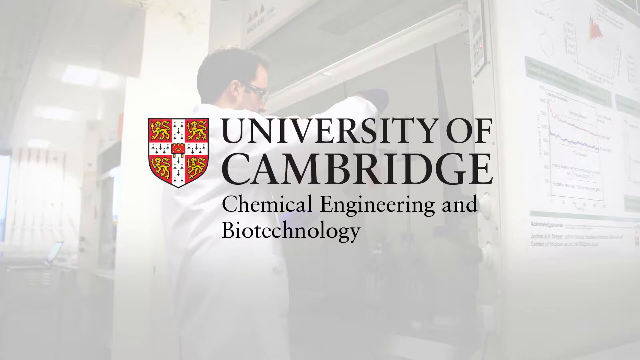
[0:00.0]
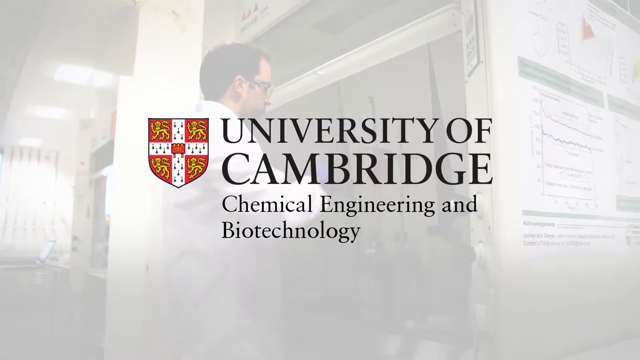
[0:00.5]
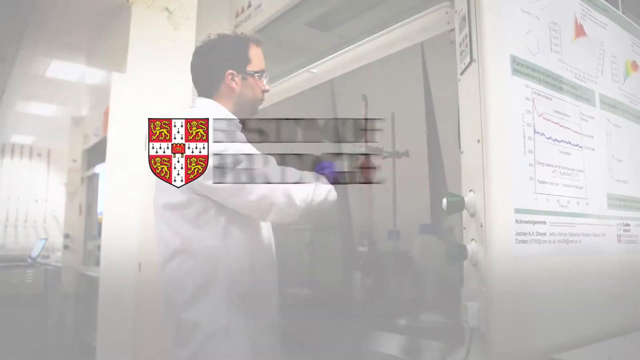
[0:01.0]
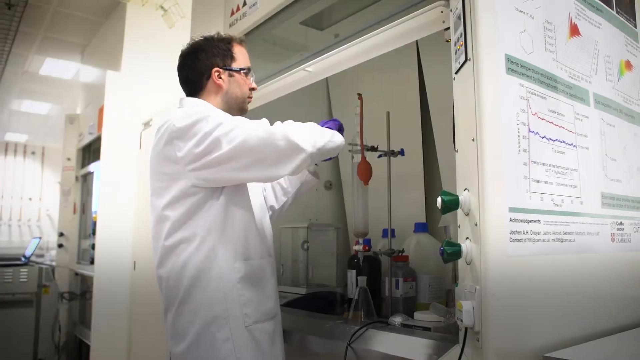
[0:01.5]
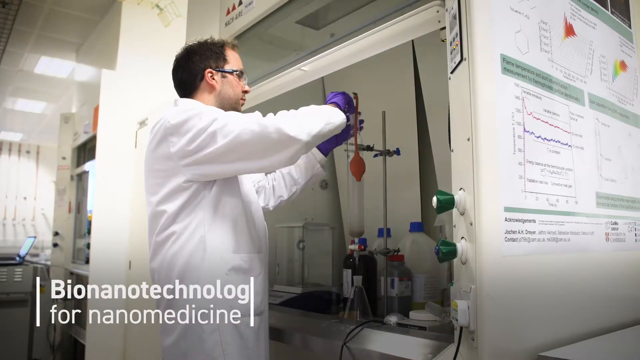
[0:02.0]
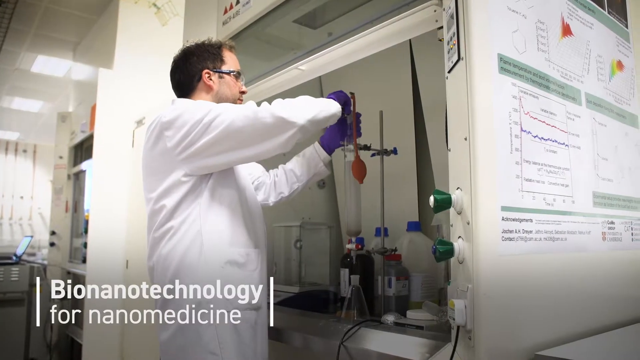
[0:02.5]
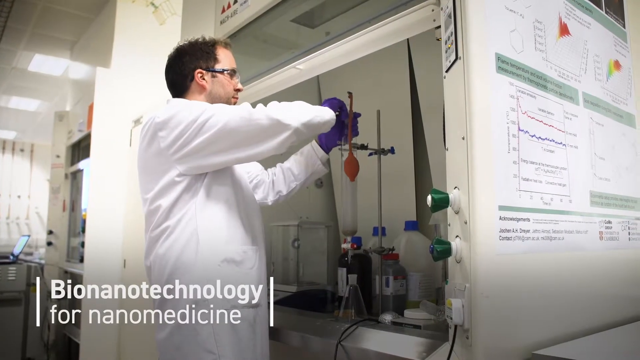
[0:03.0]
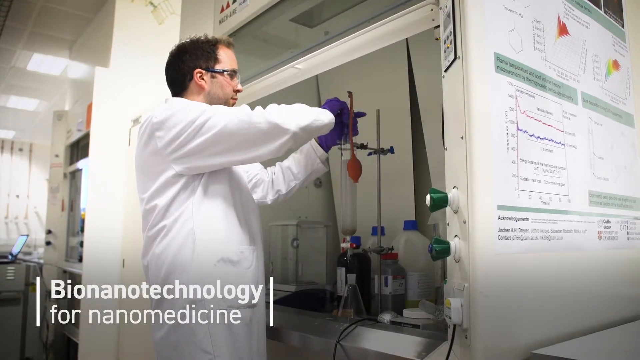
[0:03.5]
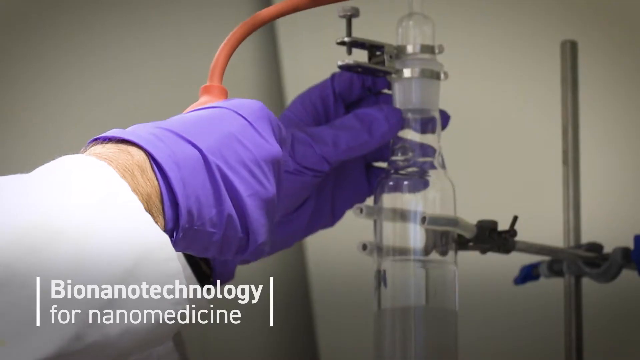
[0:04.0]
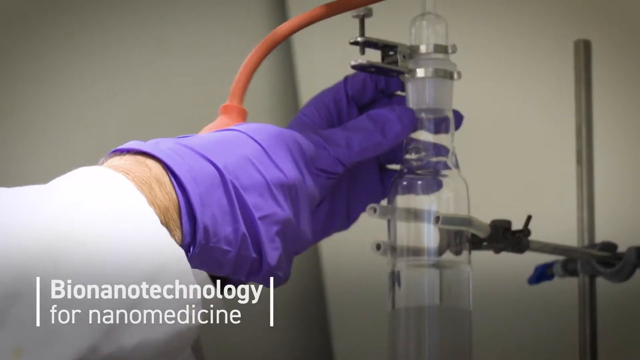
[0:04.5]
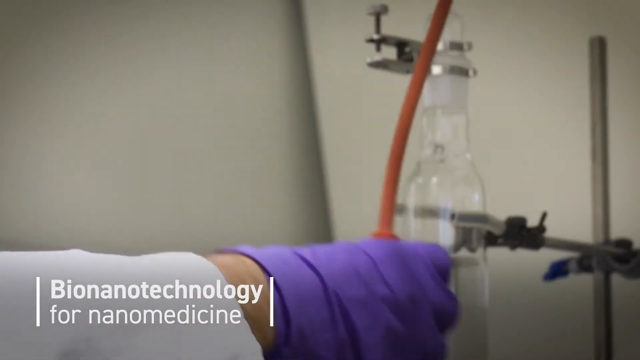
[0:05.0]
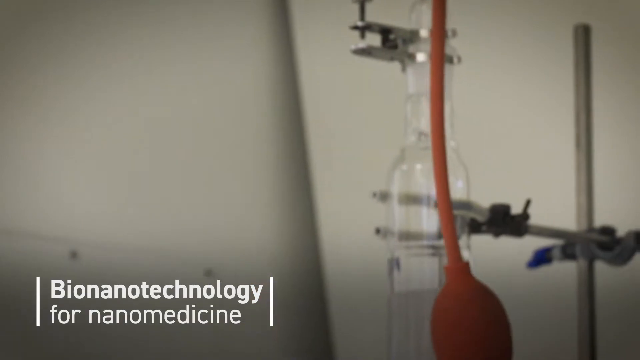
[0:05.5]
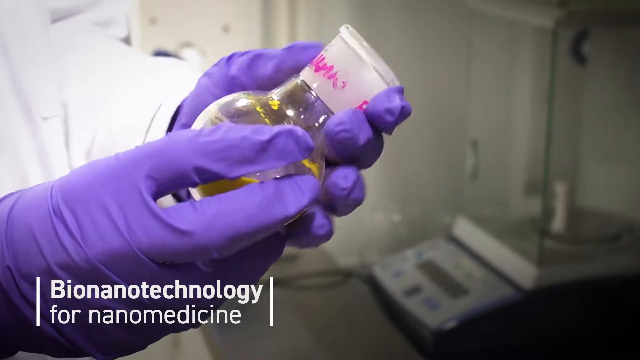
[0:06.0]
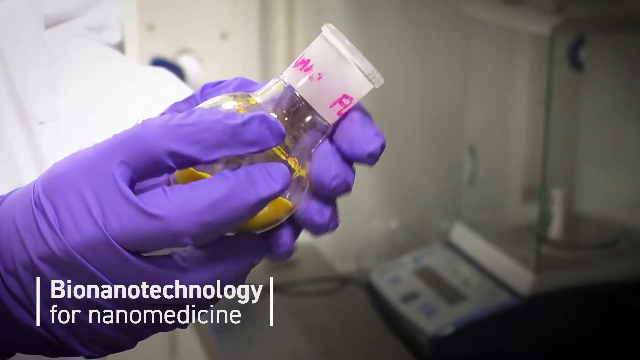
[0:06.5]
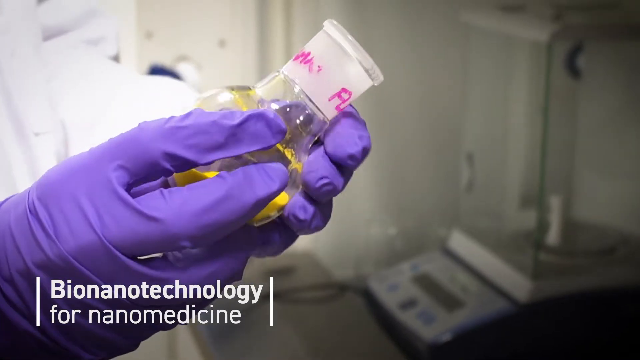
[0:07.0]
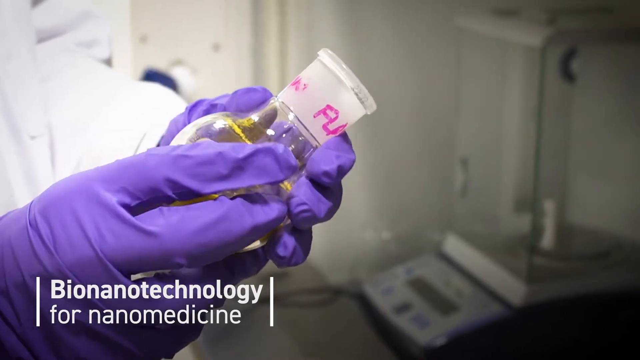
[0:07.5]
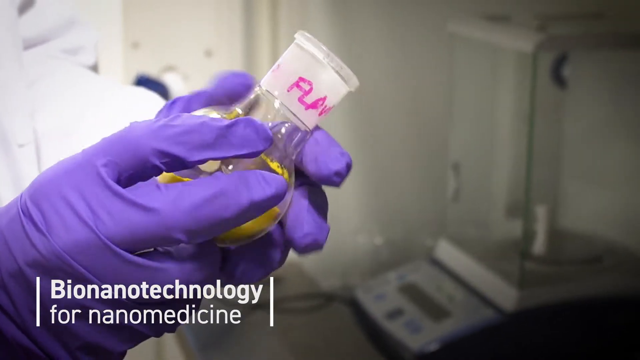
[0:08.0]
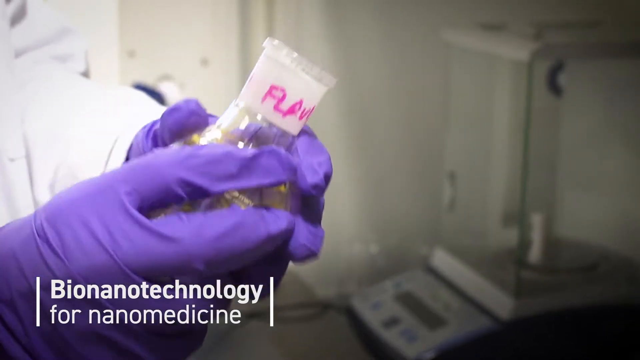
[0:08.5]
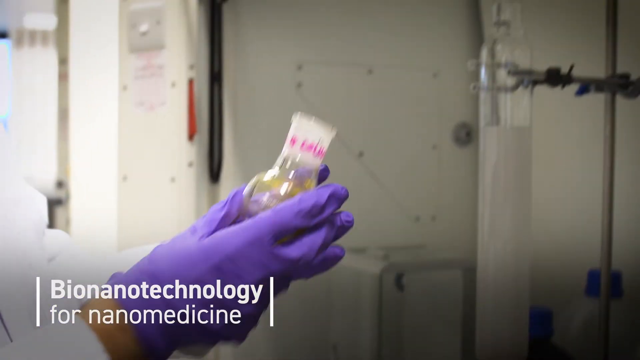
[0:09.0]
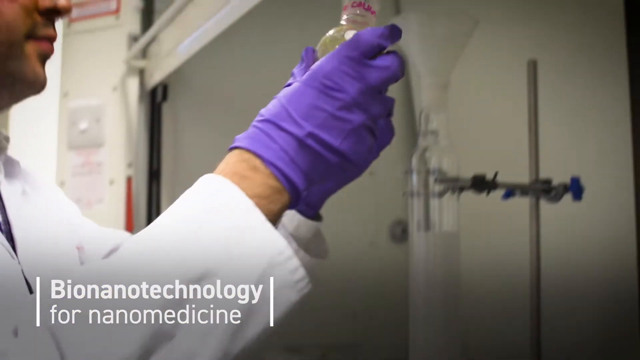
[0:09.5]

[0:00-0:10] The video apparently opens by showing Cambridge University on the screen, and then text reads "... technology for nanomedicine." A scientist wearing purple gloves holds a beaker full of a yellow substance, apparently labelled "flammable" by hand. He is working on an experiment, putting the liquid into a machine. He pumps a rubber ball, and he adds the liquid into a funnel, from which it drains into another part of the experiment, a glass container. The experiment is housed in a small enclosed area covered on three sides, like a shelf with sides, and it almost looks as if it has doors that can be closed.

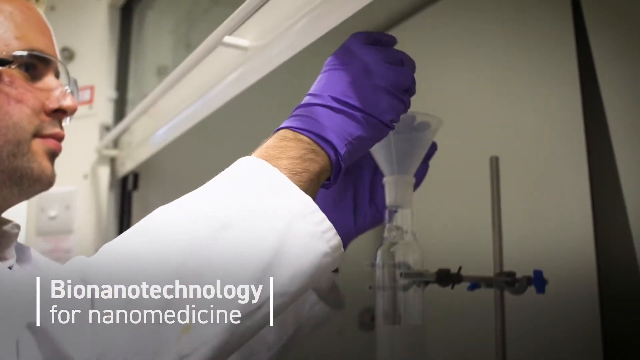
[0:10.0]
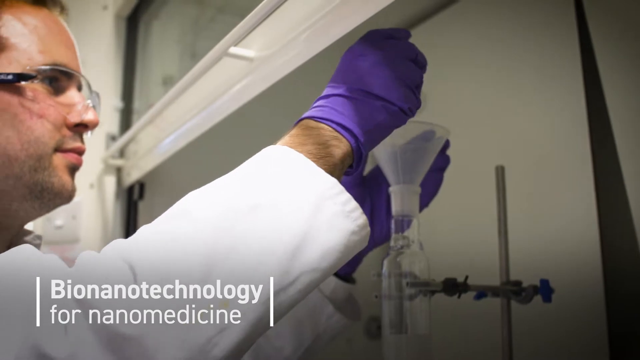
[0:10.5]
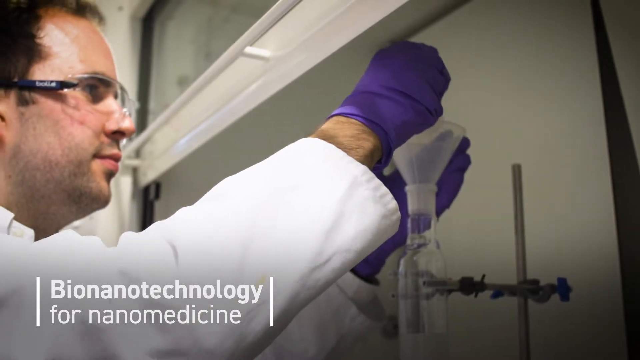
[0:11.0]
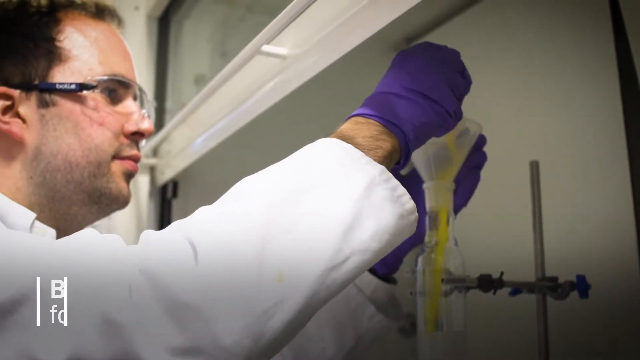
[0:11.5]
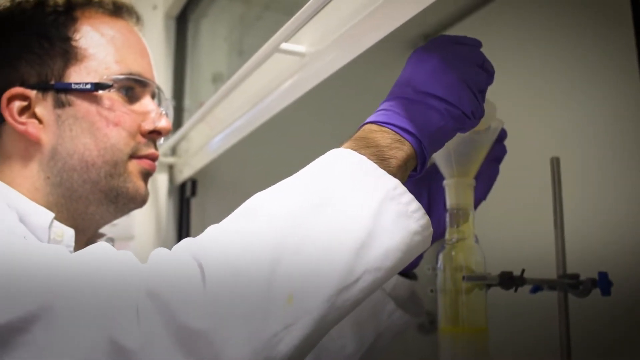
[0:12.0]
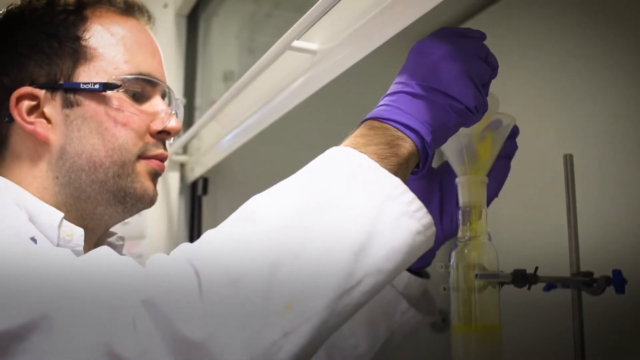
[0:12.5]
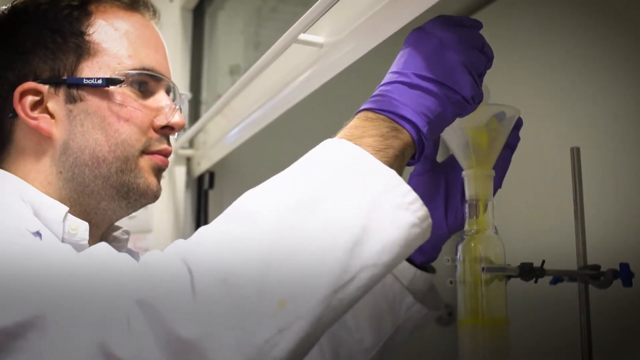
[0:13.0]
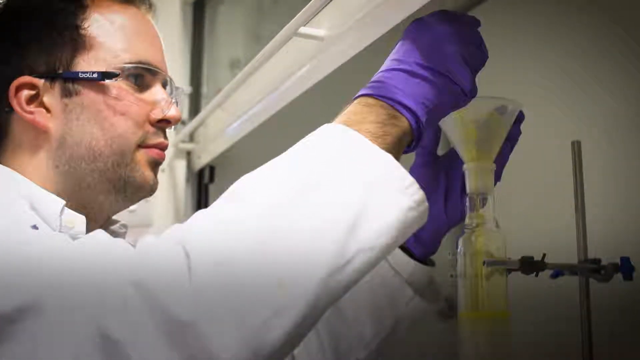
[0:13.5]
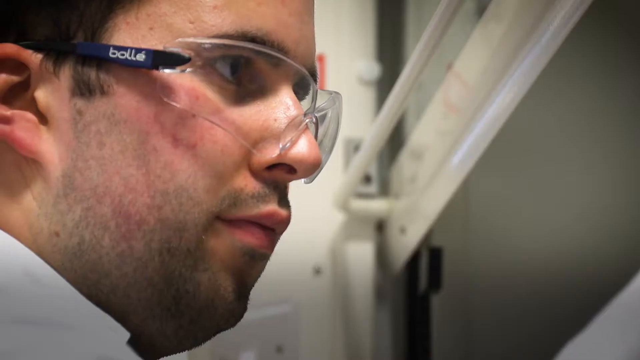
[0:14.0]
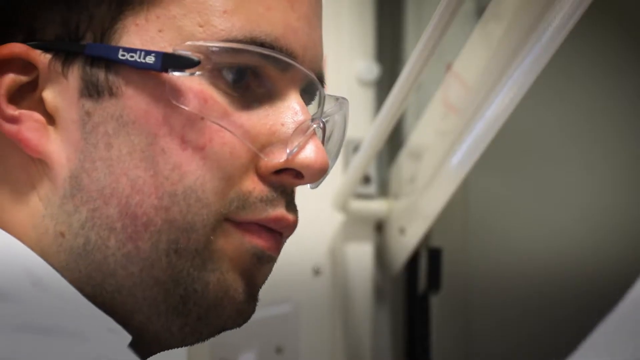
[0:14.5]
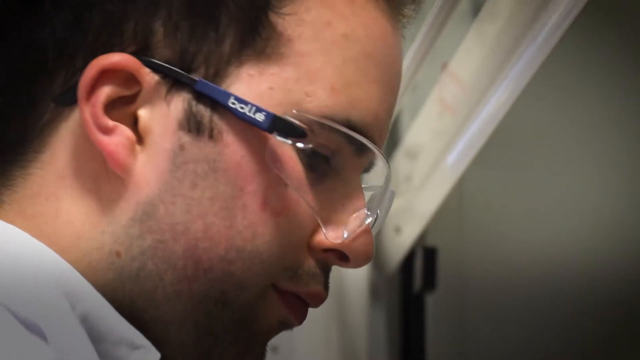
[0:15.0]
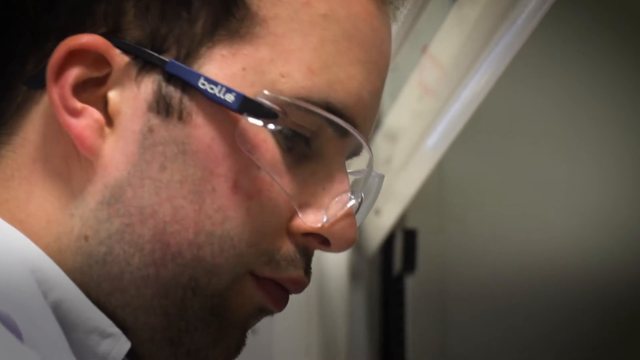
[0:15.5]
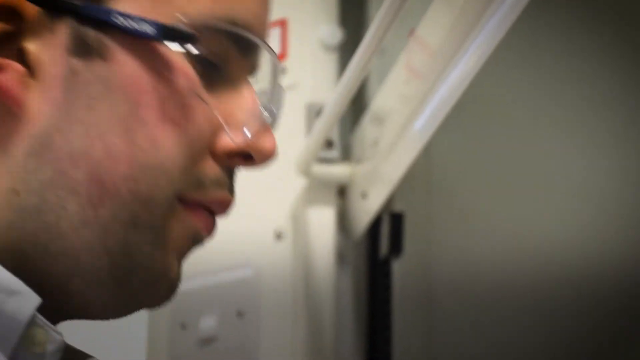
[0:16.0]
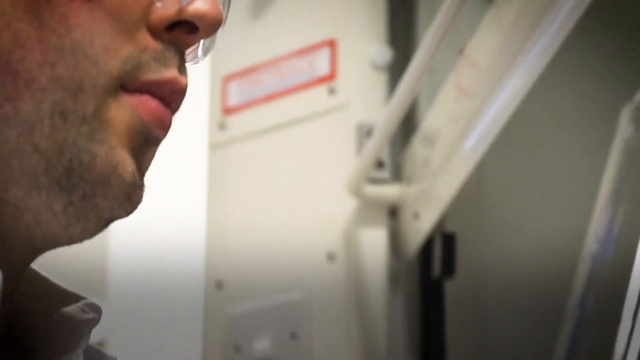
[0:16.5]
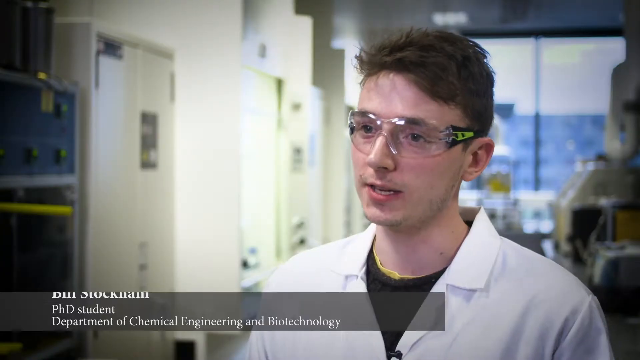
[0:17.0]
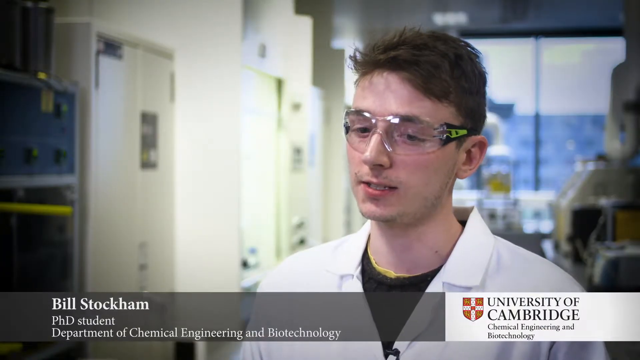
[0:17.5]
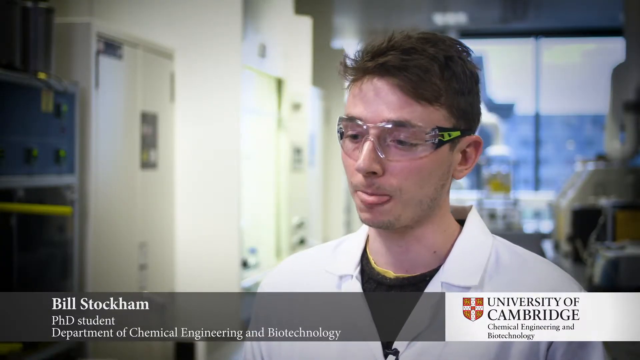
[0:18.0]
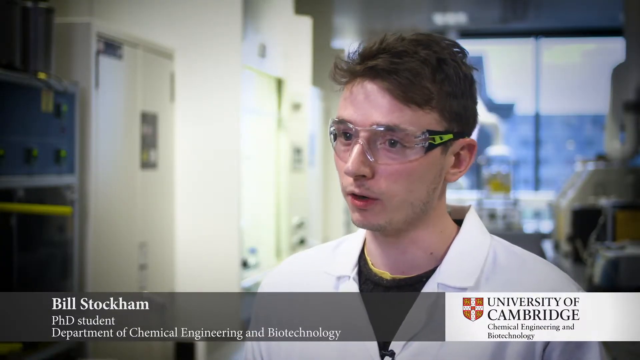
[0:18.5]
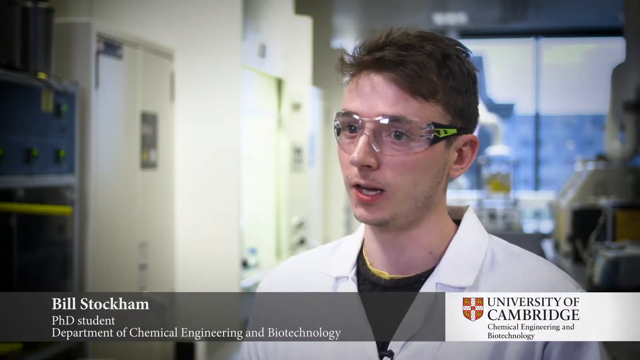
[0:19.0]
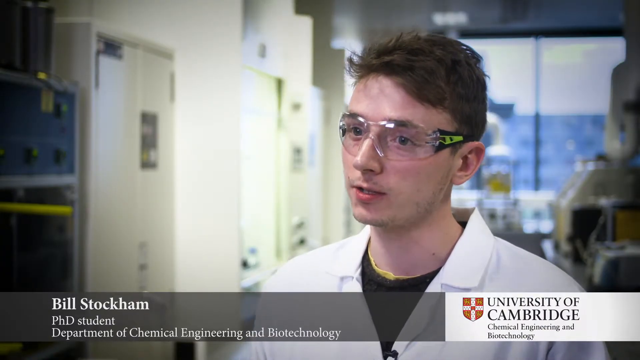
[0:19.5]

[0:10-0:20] The scientist adds yellow fluid to a beaker. He wears safety glasses and purple gloves and is doing a science experiment, adding the liquid into another container through a funnel. Another scientist, Billy Stockham, a PhD student from the Department of Chemical Engineering, is interviewed; he looks younger and also wears safety glasses. The scientist doing the experiment wears a white lab coat with a button-down shirt visible underneath. He looks young and is very focused on the yellow substance he is pouring.